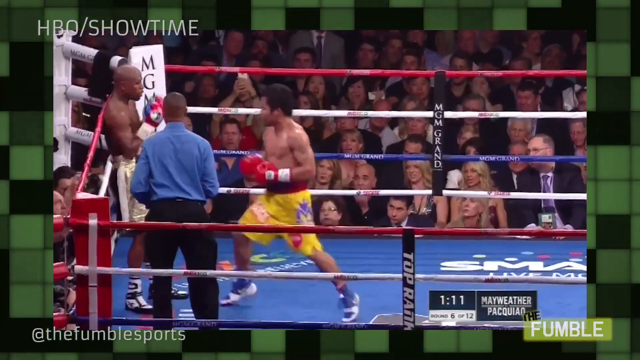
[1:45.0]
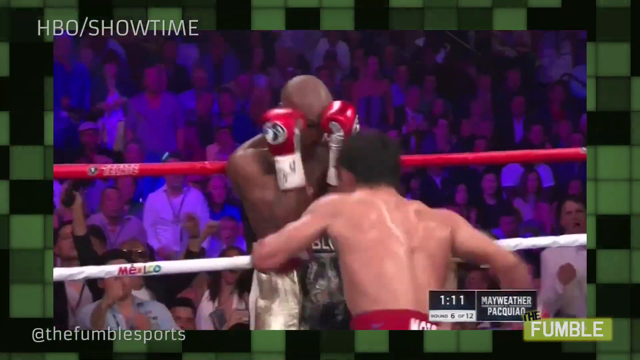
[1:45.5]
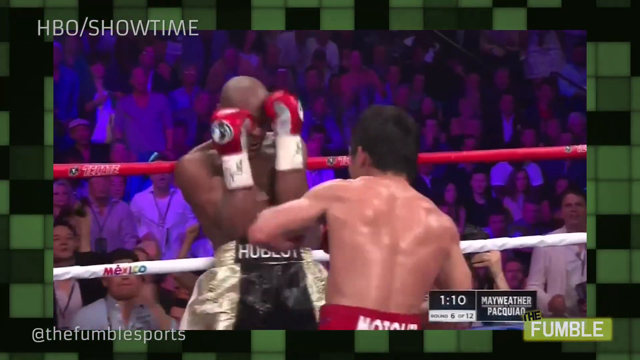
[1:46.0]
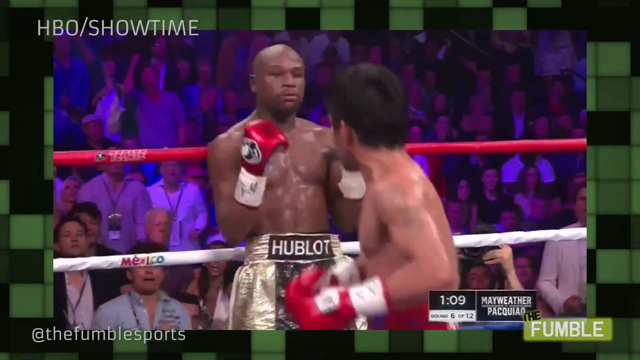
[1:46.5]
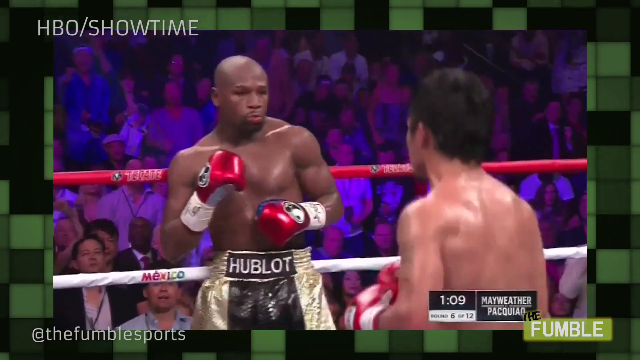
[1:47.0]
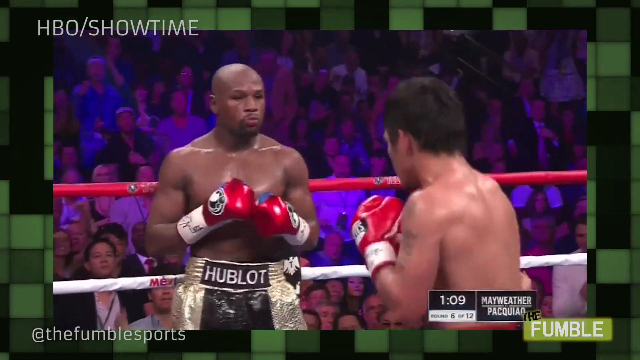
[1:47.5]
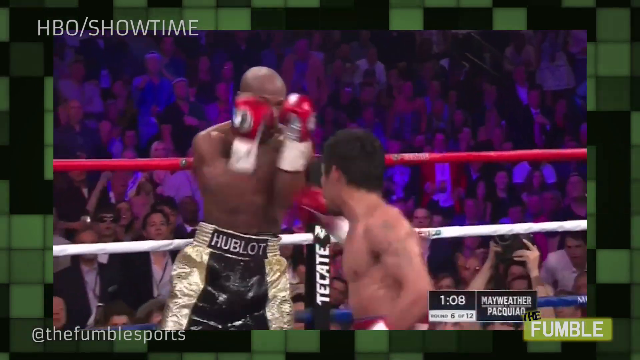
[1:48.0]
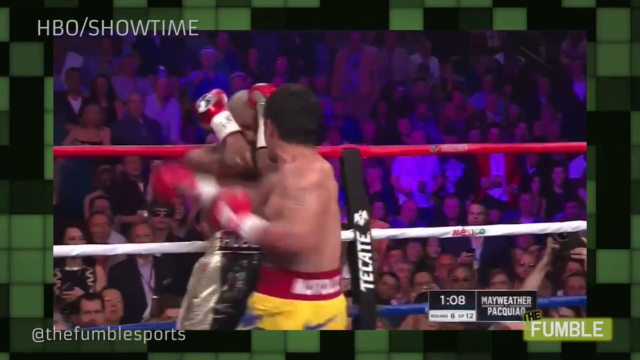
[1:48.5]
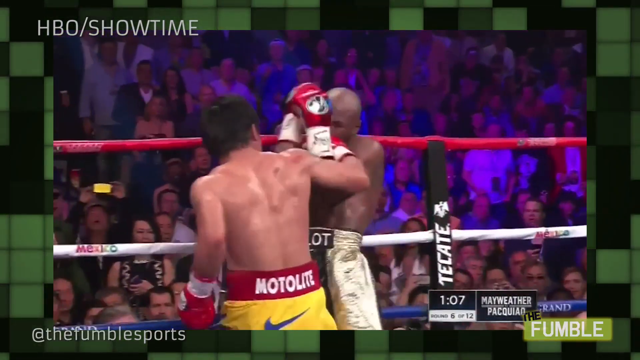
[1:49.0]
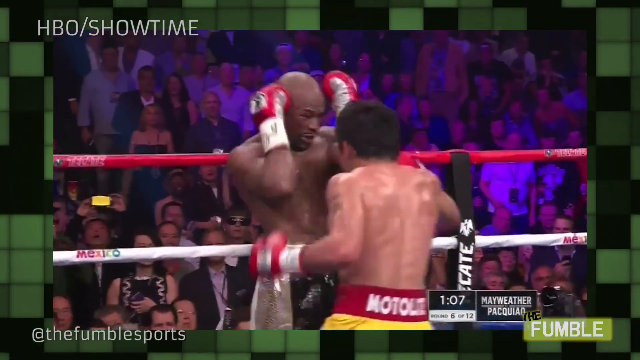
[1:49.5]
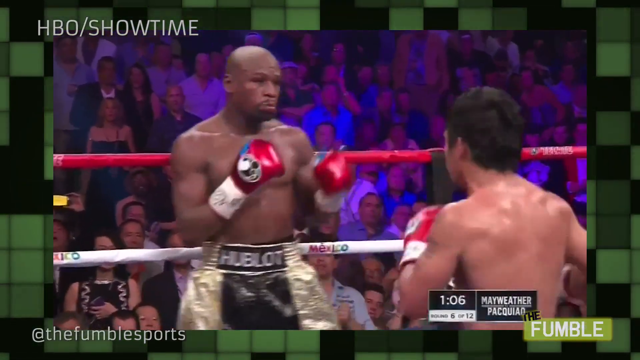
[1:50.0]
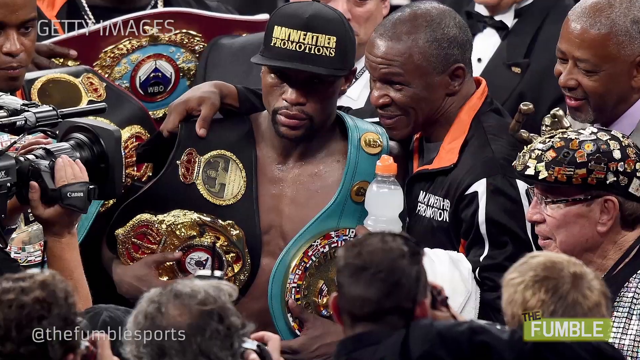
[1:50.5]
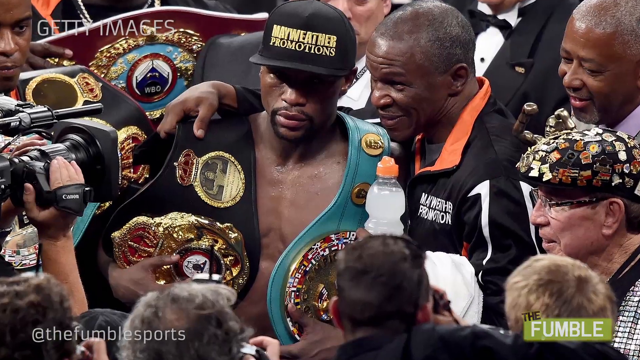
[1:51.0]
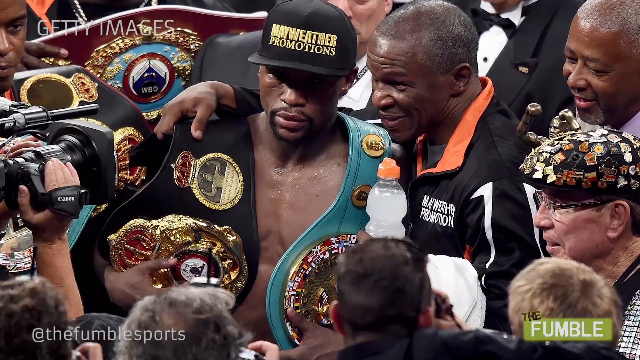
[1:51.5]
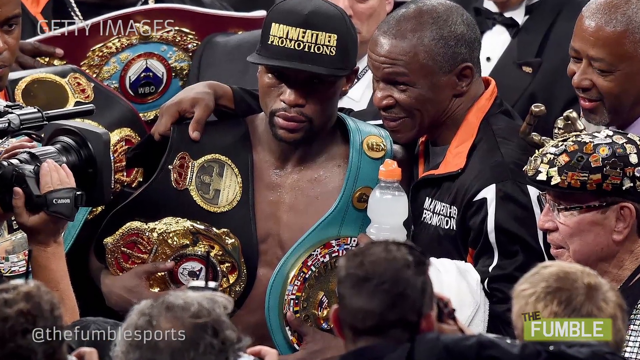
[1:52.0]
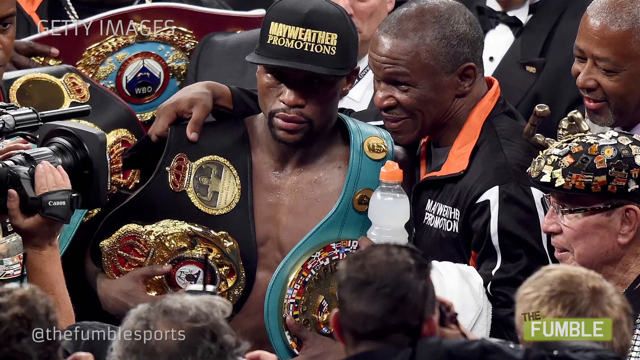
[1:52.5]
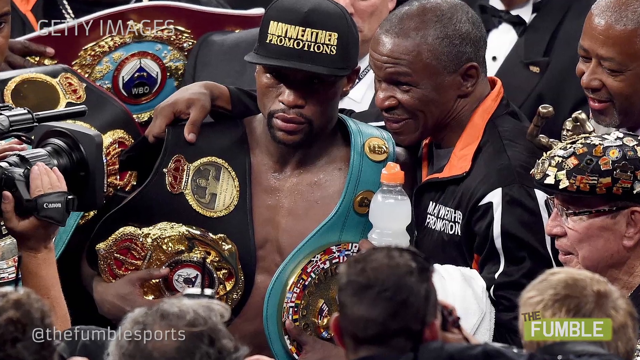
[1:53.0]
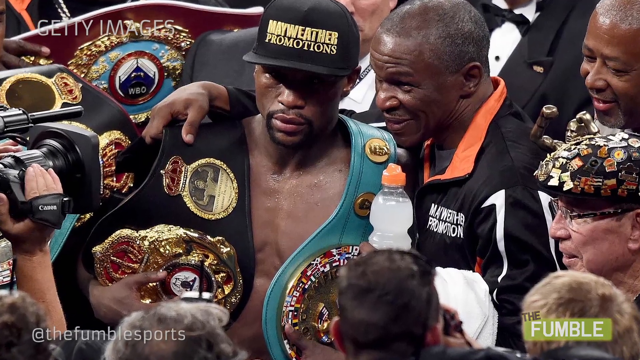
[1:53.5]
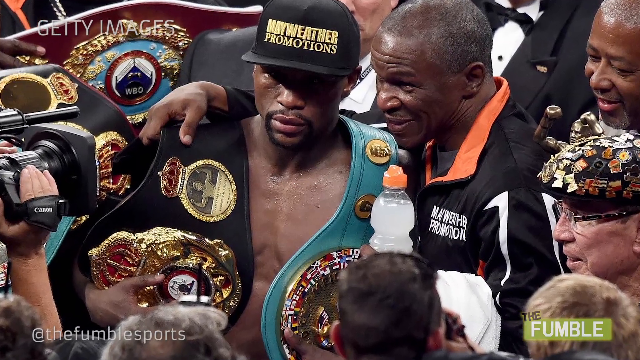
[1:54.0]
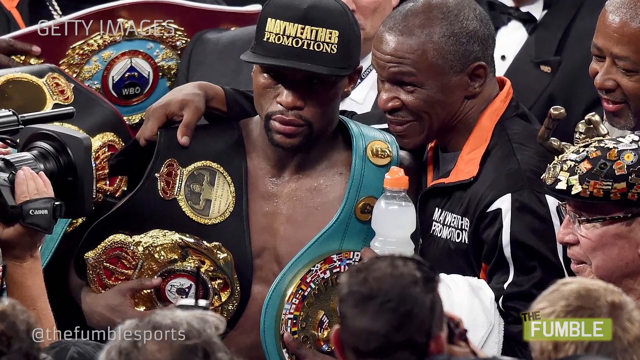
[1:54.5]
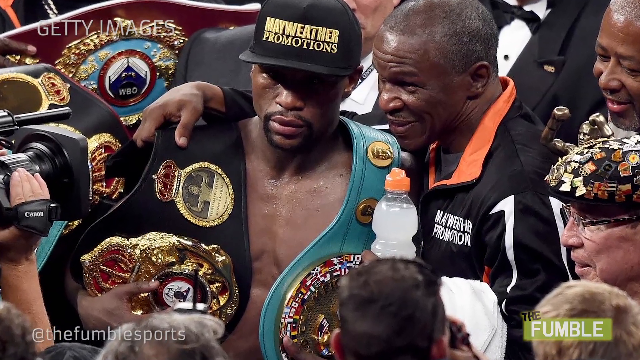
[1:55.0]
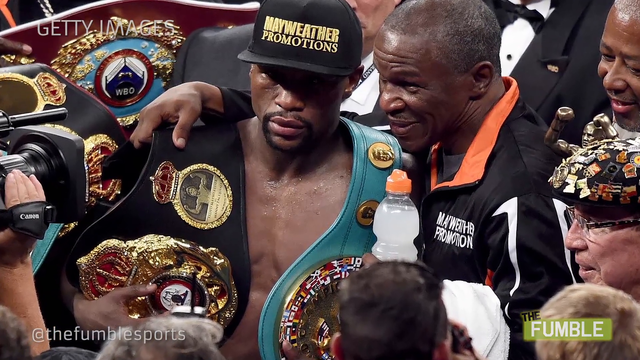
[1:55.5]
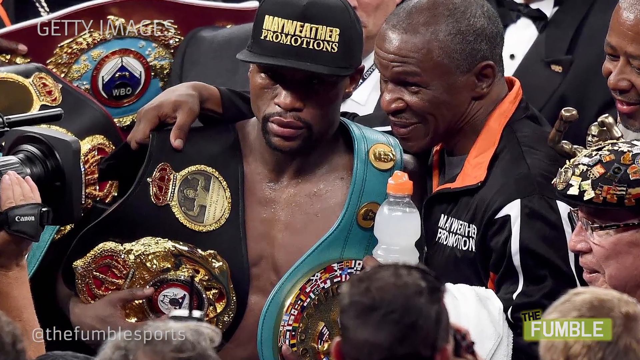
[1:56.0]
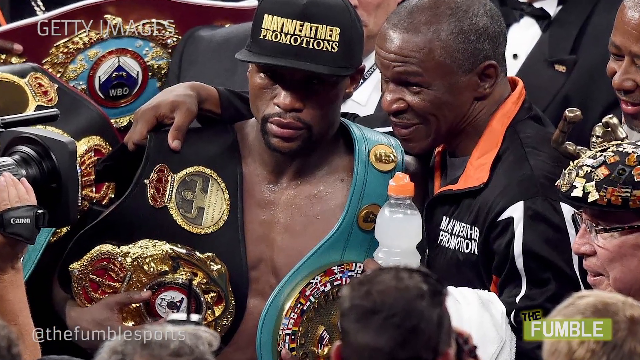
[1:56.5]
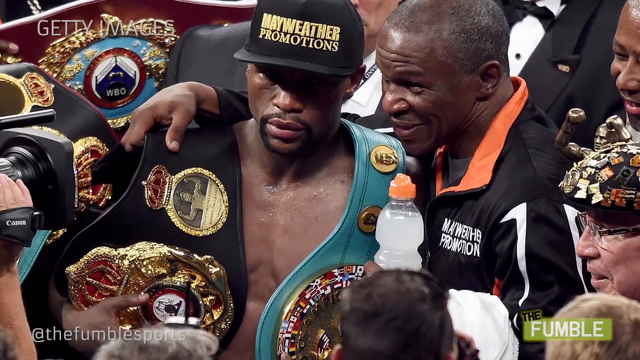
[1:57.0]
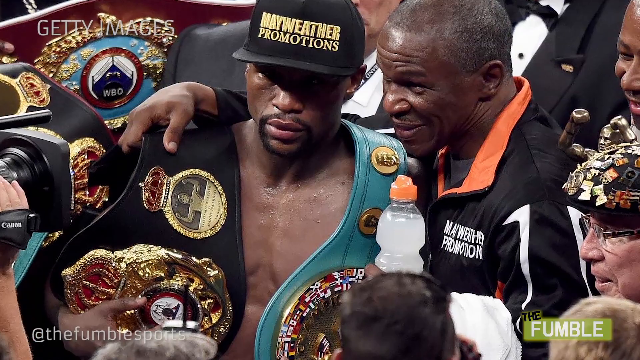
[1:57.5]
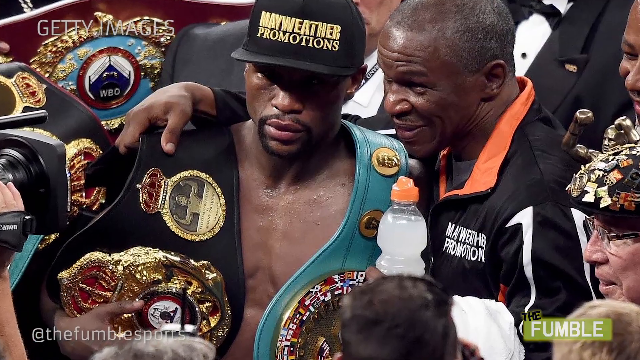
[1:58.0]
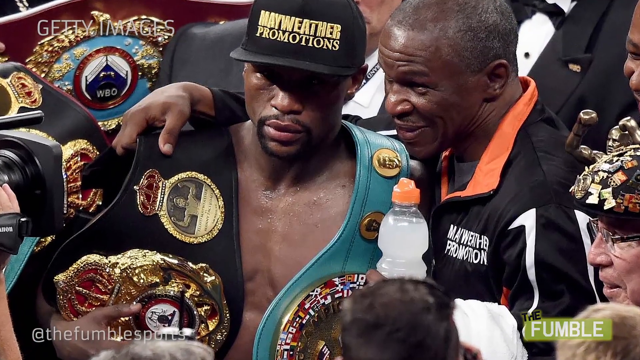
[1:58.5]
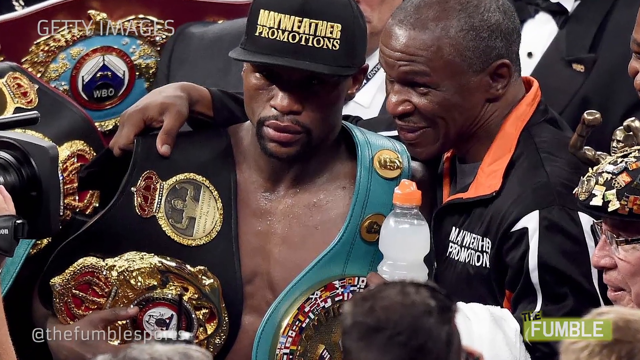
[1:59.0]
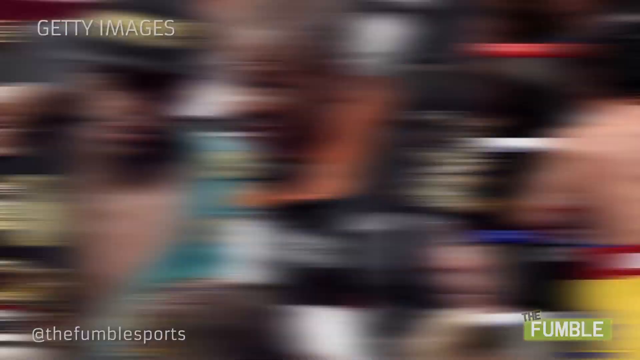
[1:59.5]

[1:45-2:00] Footage from the prime-time boxing match between Mayweather and Pacquiao shows a large crowd of people surrounding the ring. Pacquiao has Mayweather up against the ropes, taking fast shots to his stomach and head, and Mayweather shakes his head toward Pacquiao. The video changes to a still photograph of Mayweather wearing two medal belts, one on each shoulder. A man next to him, who might be his coach, has his arm around him; he is surrounded by different people and a video camera faces toward him. Another photograph shows the boxing match with the ref between the two boxers, his hand outstretched between them; it looks like he is trying to break them up.